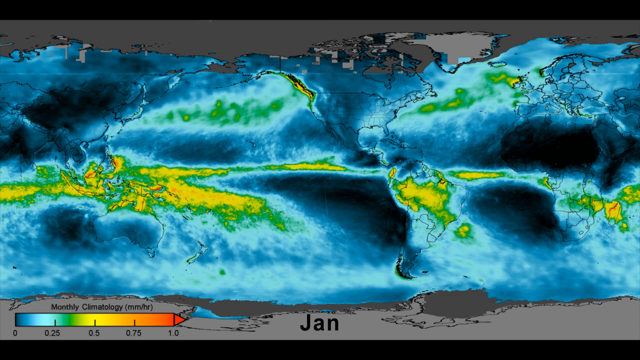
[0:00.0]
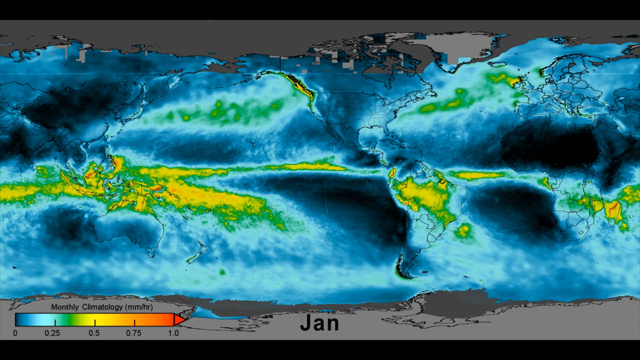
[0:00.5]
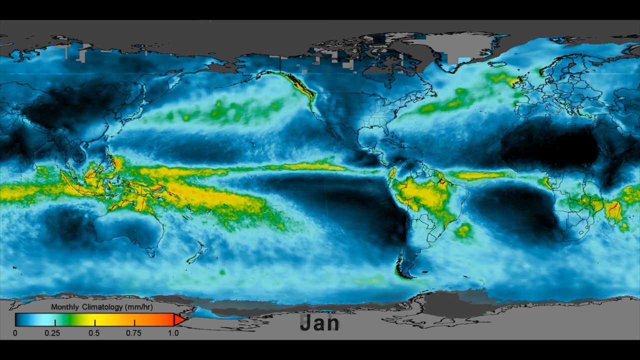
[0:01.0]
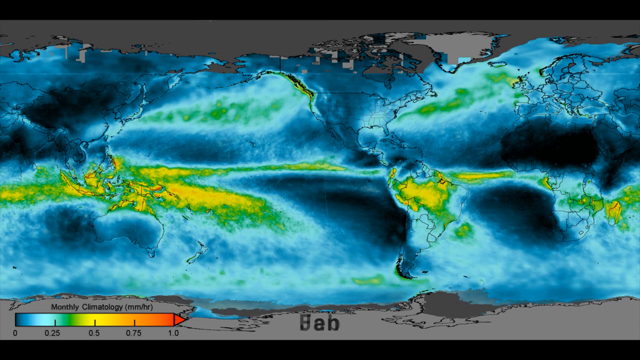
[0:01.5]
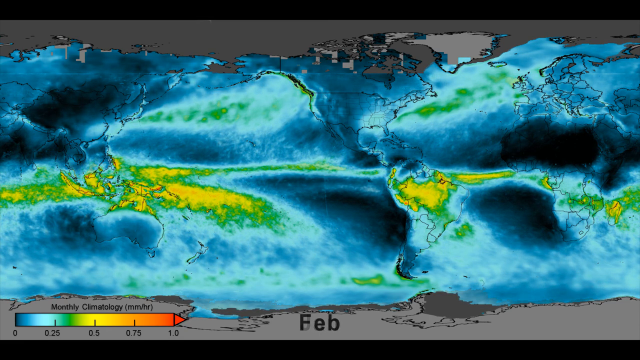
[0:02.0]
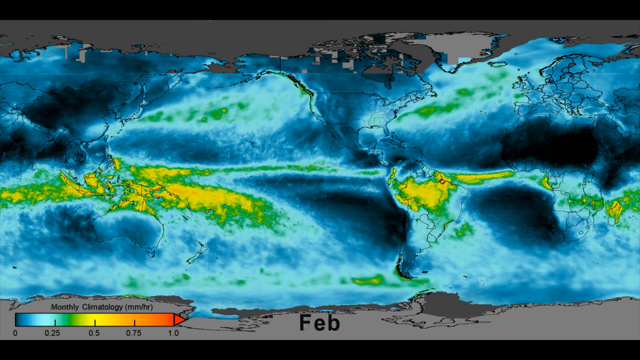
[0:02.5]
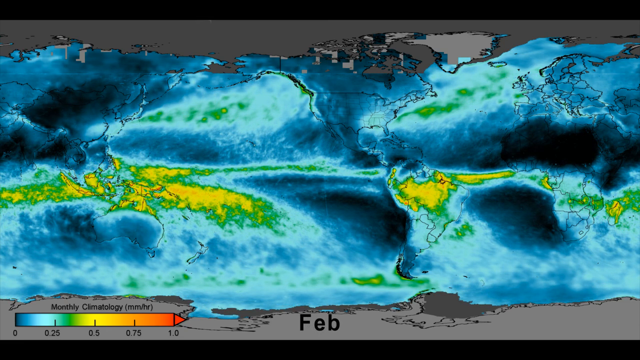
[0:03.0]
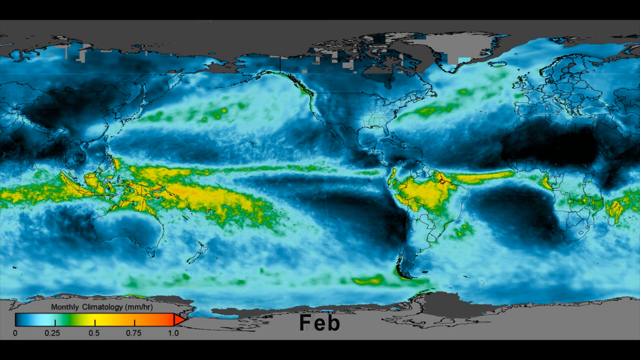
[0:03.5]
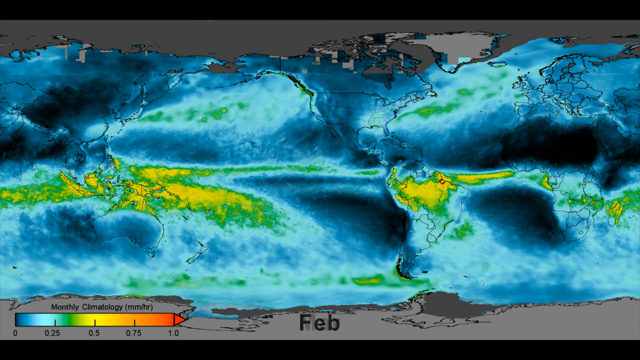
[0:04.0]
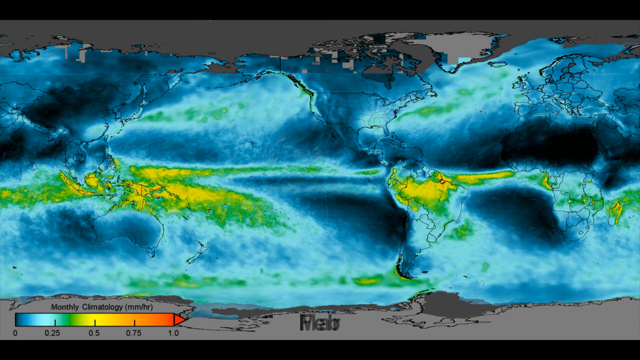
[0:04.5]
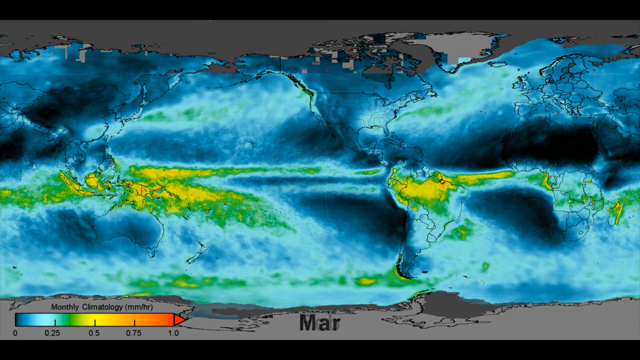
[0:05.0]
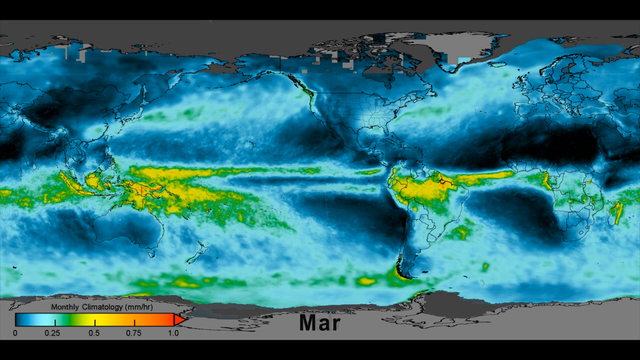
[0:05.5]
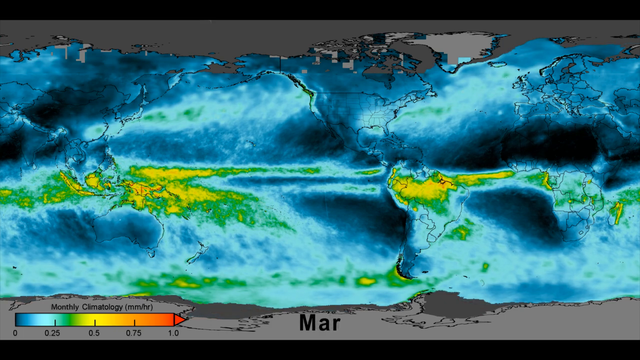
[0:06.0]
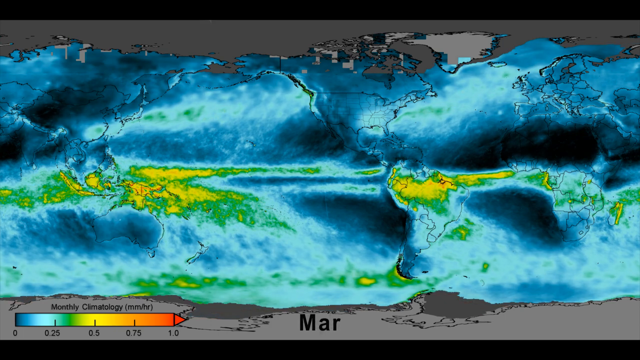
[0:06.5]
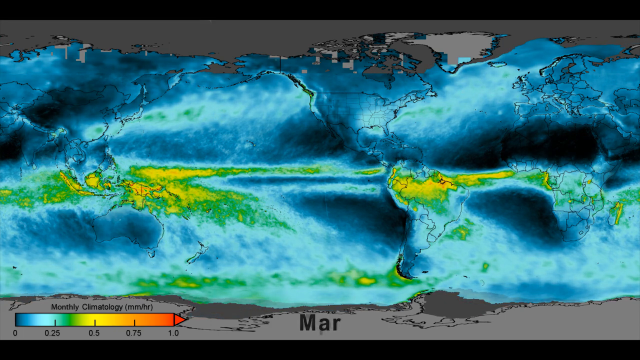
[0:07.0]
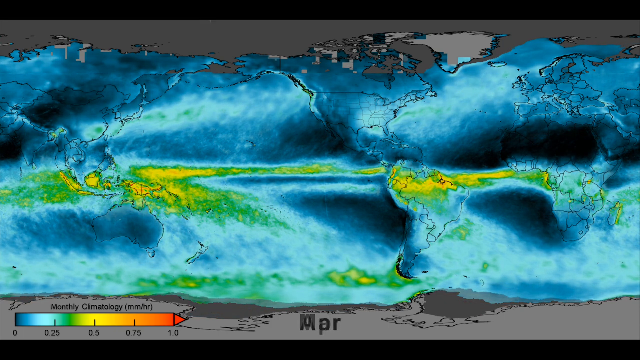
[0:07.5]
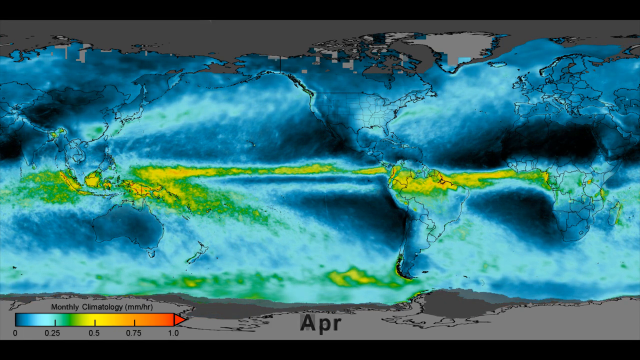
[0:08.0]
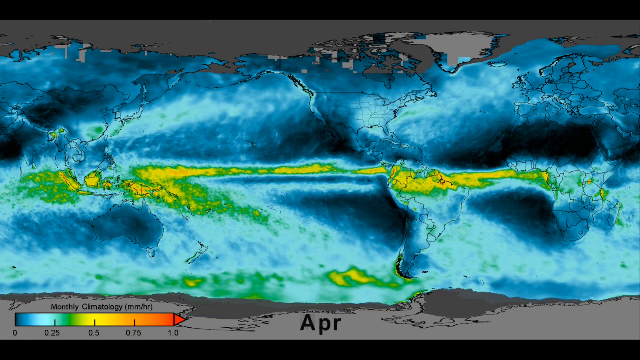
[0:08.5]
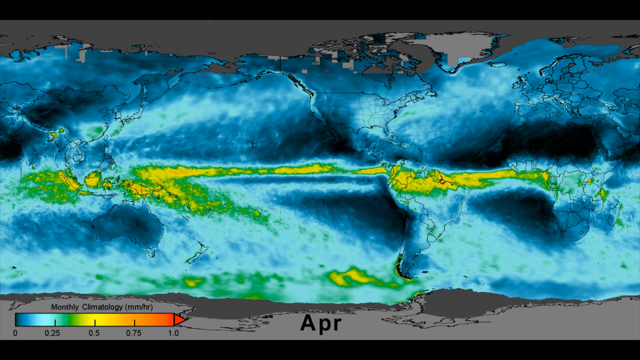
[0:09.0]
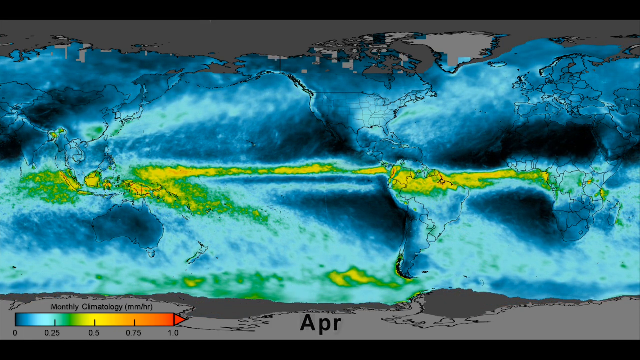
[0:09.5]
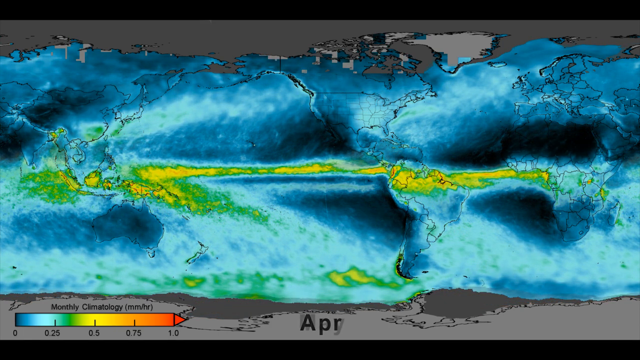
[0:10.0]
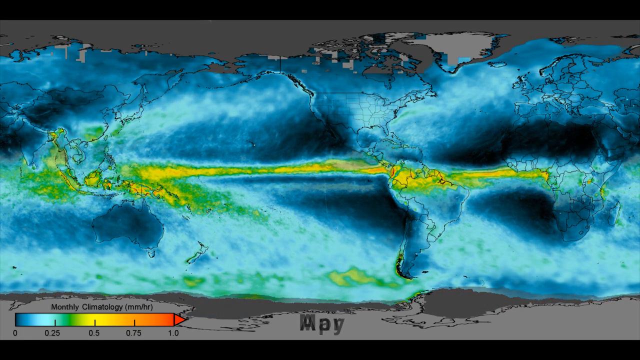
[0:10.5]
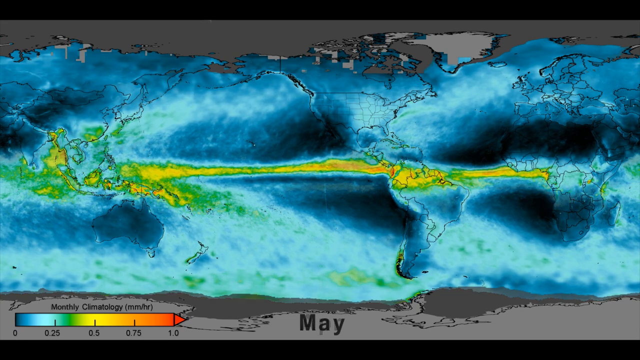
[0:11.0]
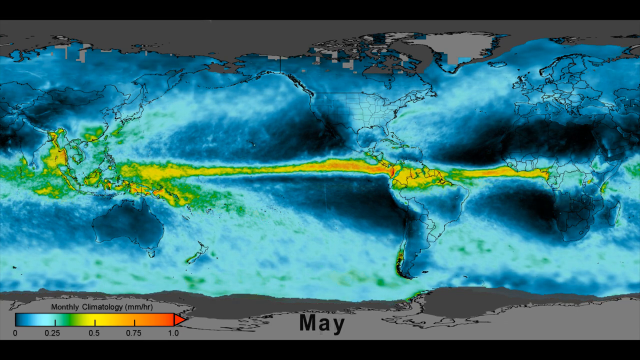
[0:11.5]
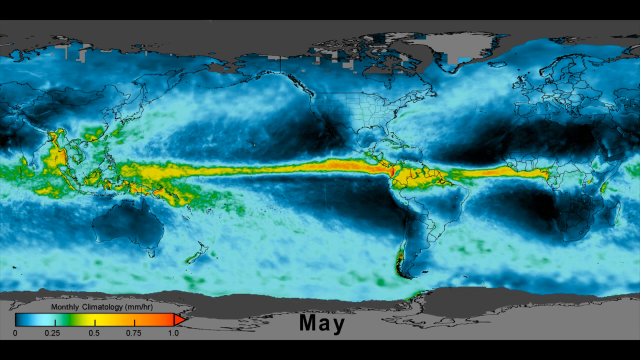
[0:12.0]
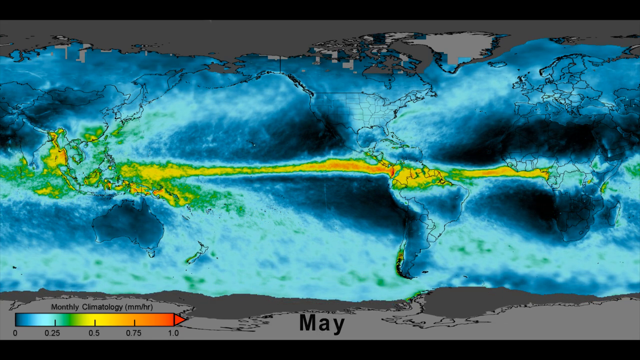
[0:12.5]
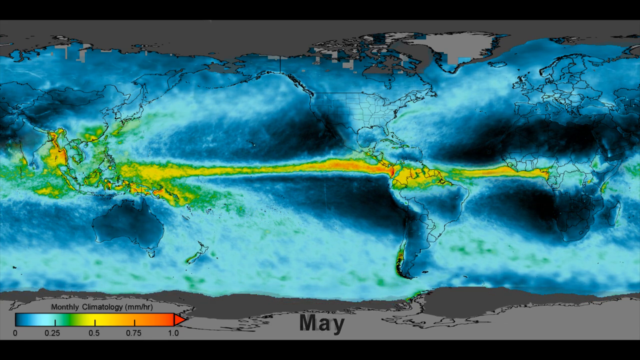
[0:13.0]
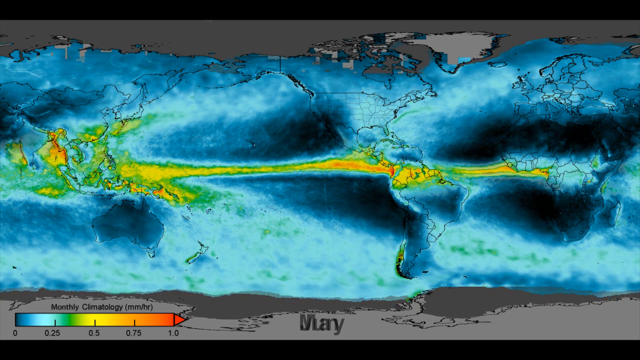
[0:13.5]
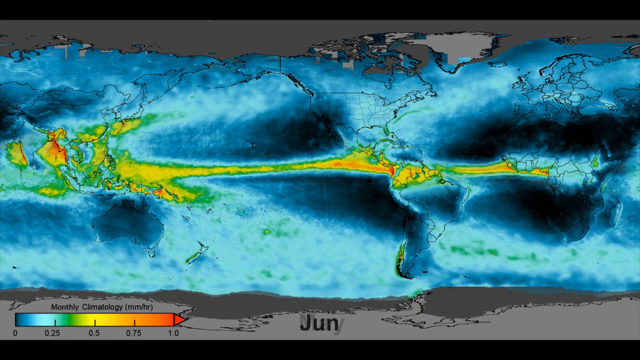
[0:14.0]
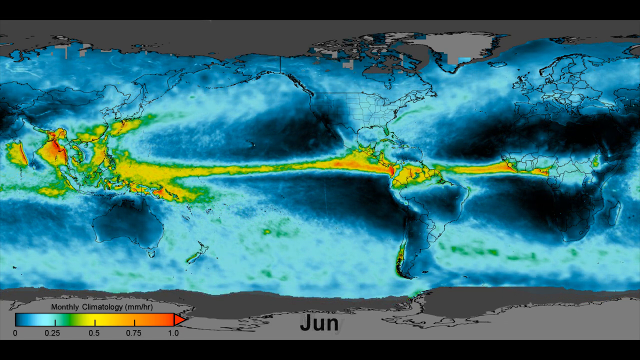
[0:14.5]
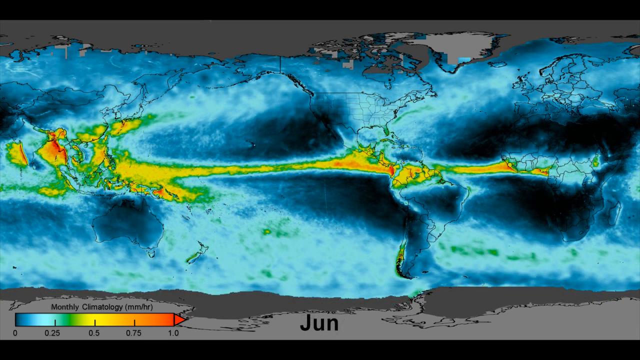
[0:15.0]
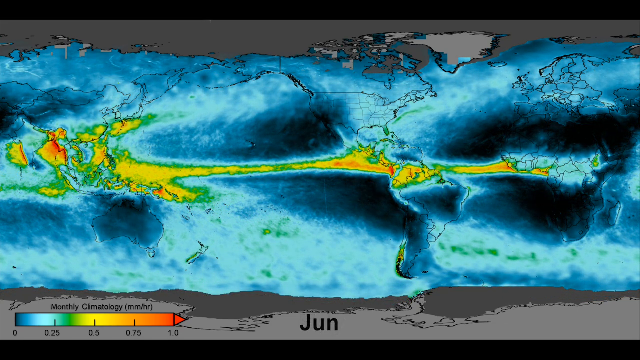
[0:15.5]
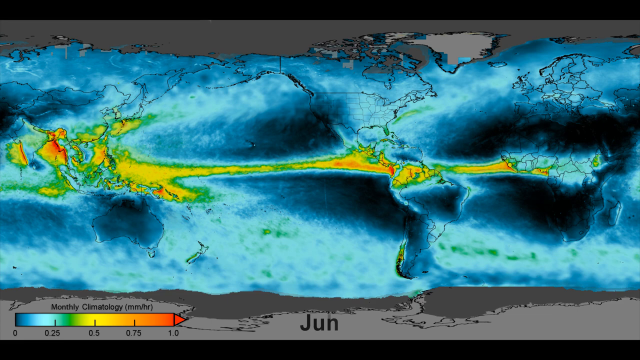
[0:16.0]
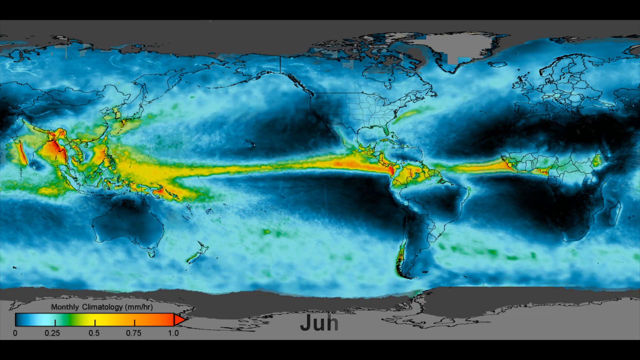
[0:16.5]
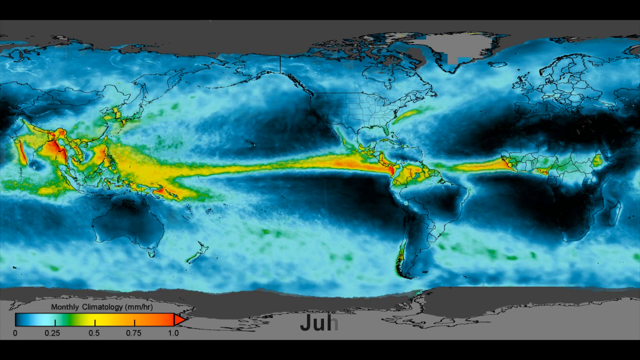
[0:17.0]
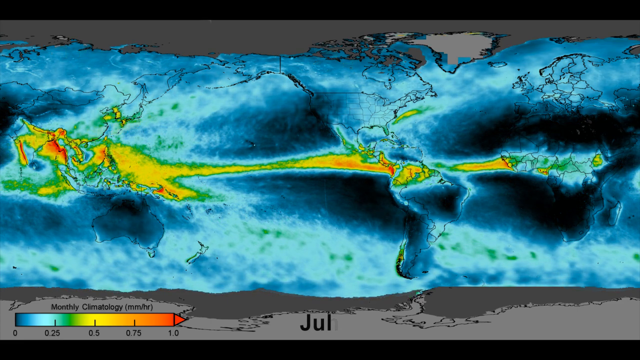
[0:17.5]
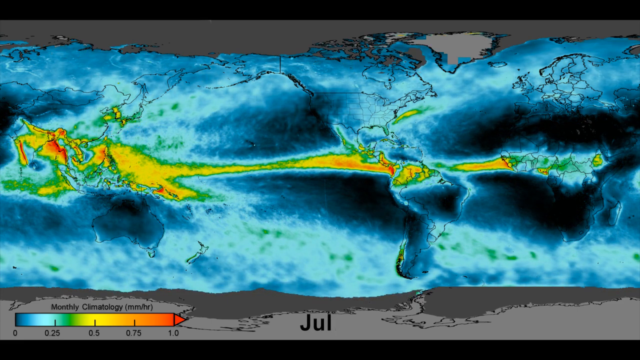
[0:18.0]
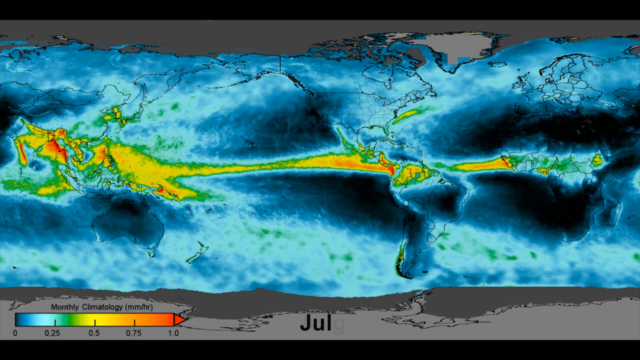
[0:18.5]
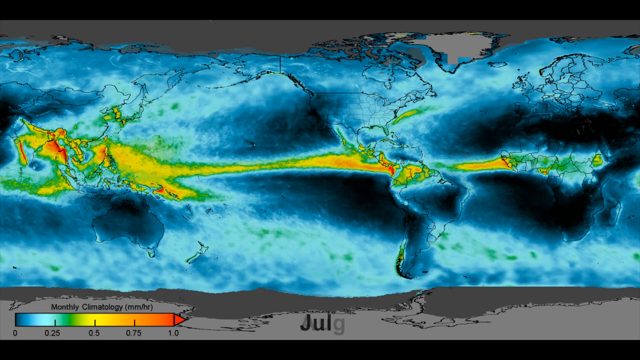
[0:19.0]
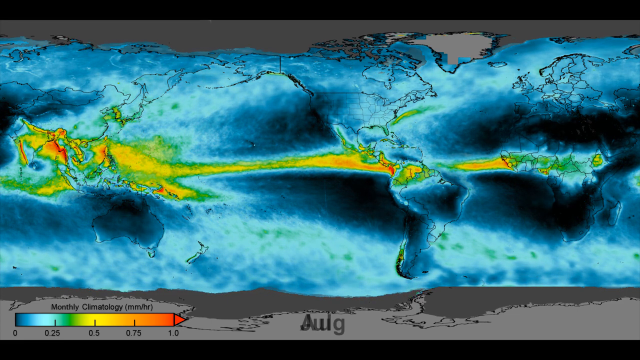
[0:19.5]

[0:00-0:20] The video appears to show some kind of weather patterns in thermal-image-style colors. The image is mostly blue and dark blue, with green in the middle and some yellow, all kind of swirled about in a way that almost gives the illusion of continents or maps, though it seems to be weather patterns of some sort. There is not much movement. At the bottom, text reads "mar" and then shifts to "apr", apparently showing change over a couple of months. In the lower left is a kind of key or temperature key that goes from blue to red on the right, almost shaped like a crayon, labeled at the bottom with "0", "0.25", "0.5", "0.75" and "1.0". The top and bottom are in more gray colors, with the bright colors in the middle. There is some dark blue in the background, but mostly bright blues, bright greens and bright yellows, with a tiny bit of red.